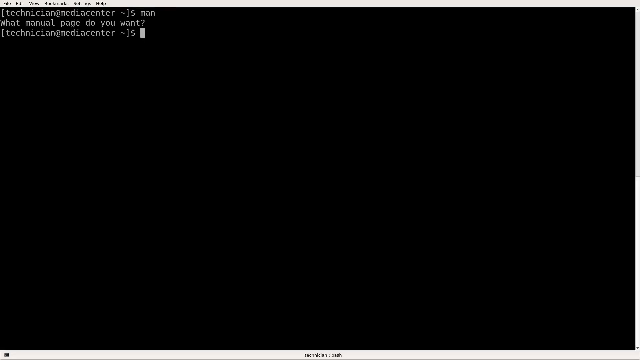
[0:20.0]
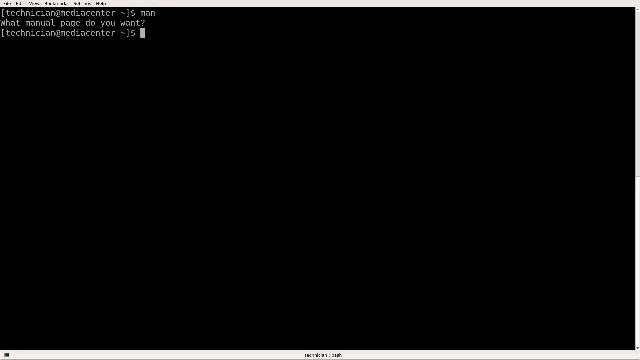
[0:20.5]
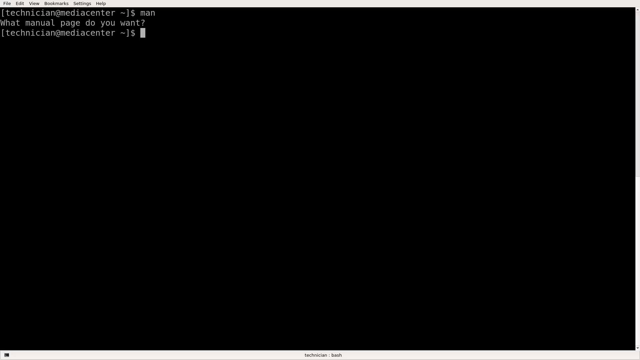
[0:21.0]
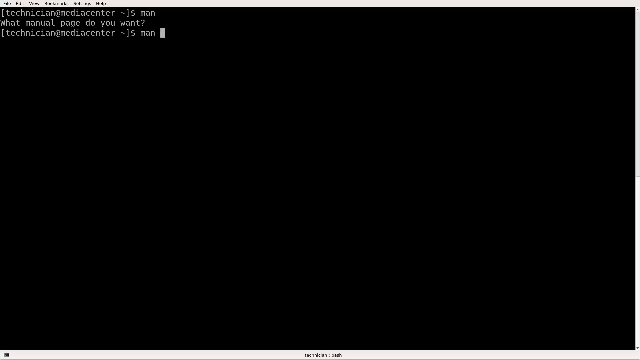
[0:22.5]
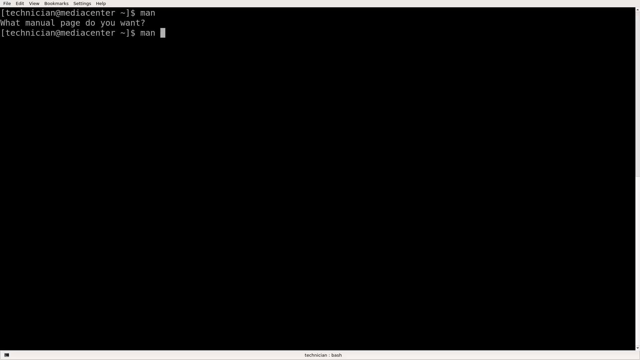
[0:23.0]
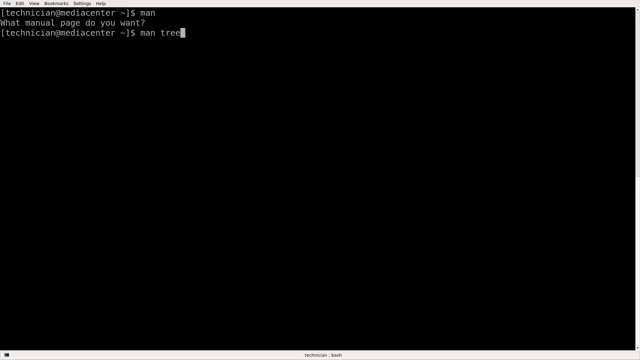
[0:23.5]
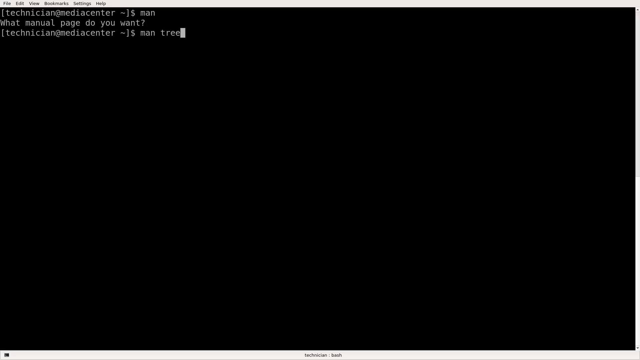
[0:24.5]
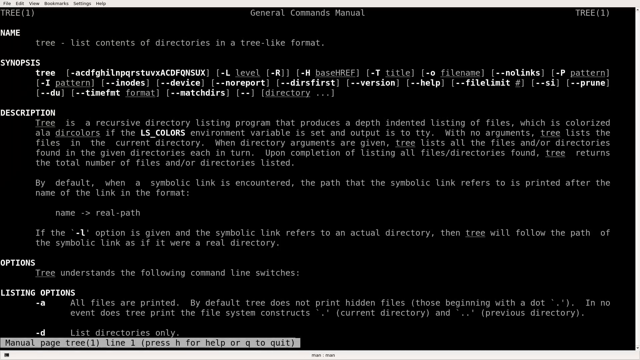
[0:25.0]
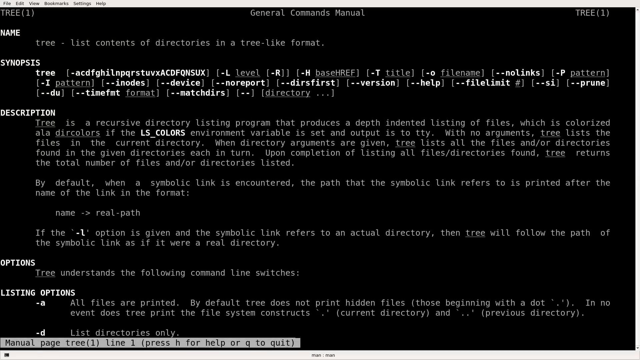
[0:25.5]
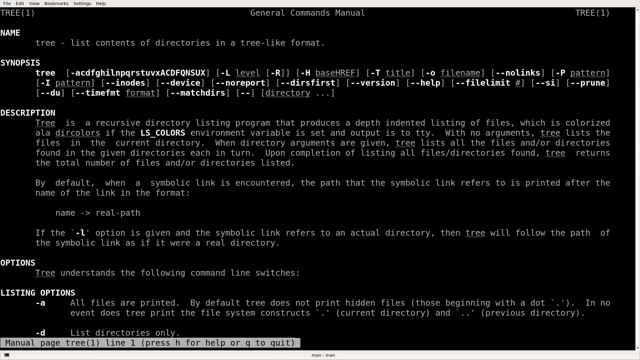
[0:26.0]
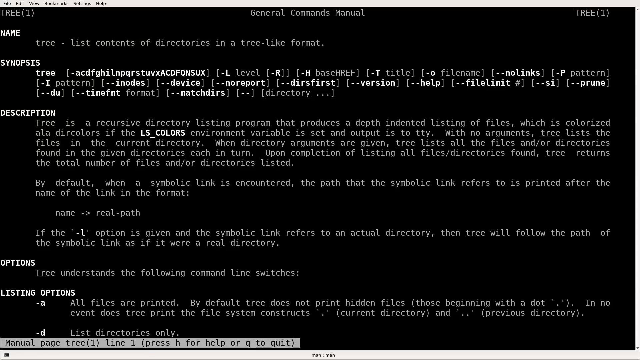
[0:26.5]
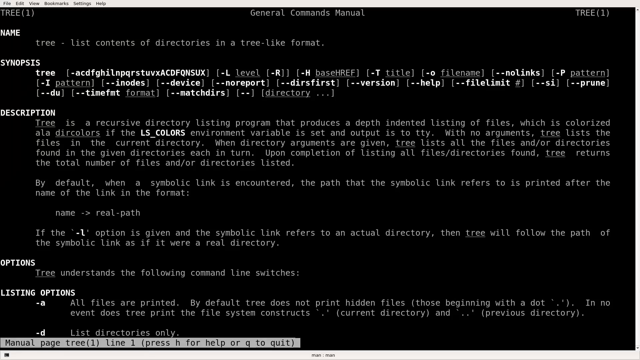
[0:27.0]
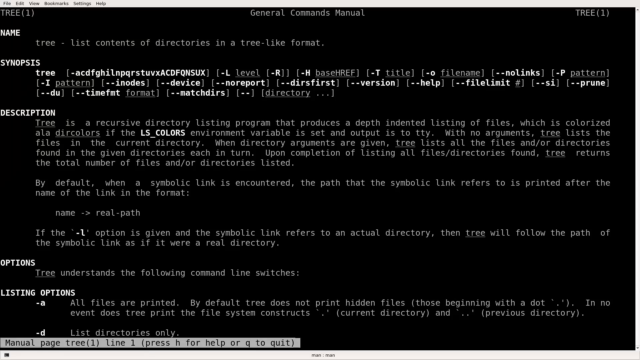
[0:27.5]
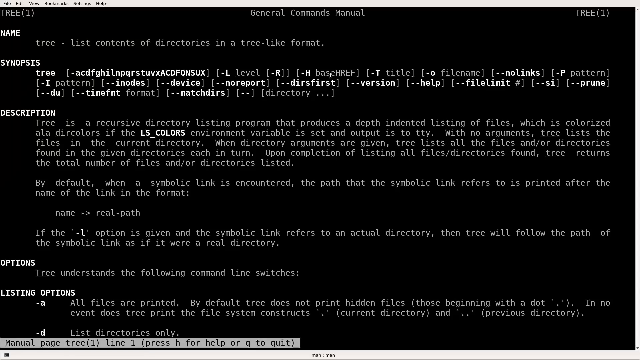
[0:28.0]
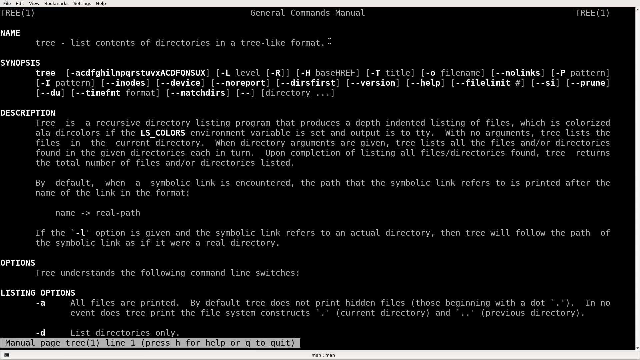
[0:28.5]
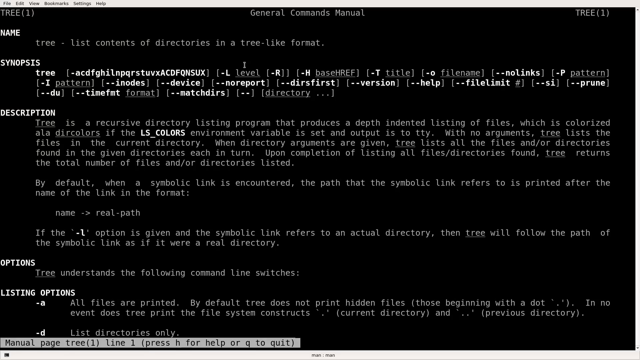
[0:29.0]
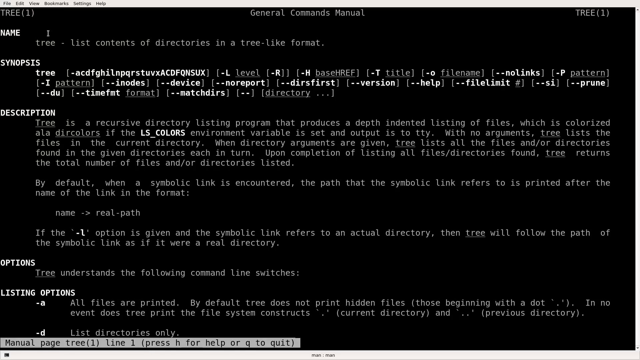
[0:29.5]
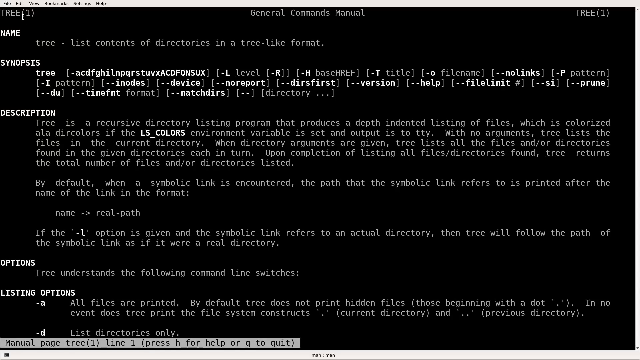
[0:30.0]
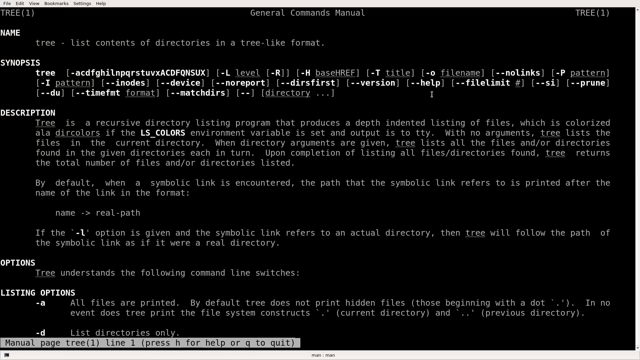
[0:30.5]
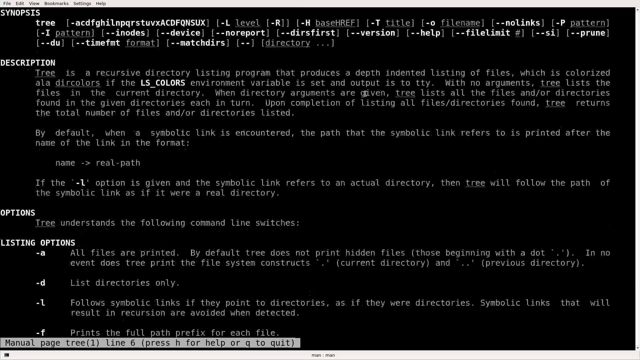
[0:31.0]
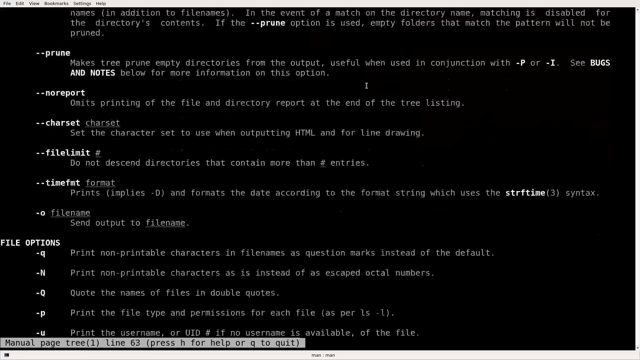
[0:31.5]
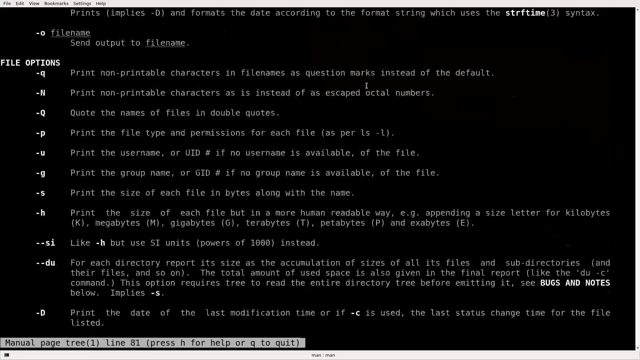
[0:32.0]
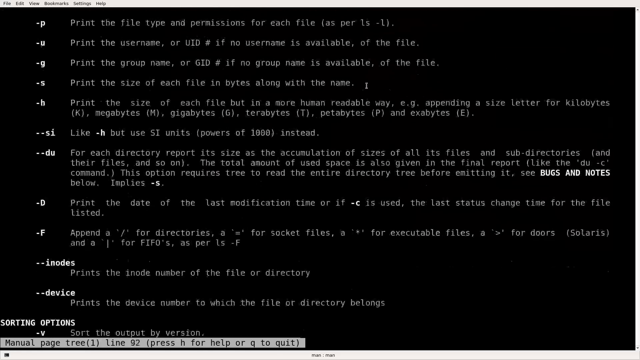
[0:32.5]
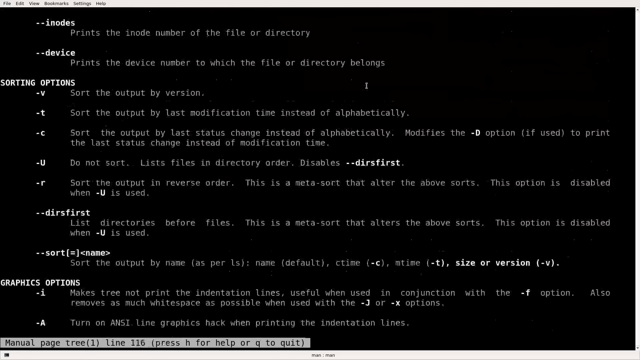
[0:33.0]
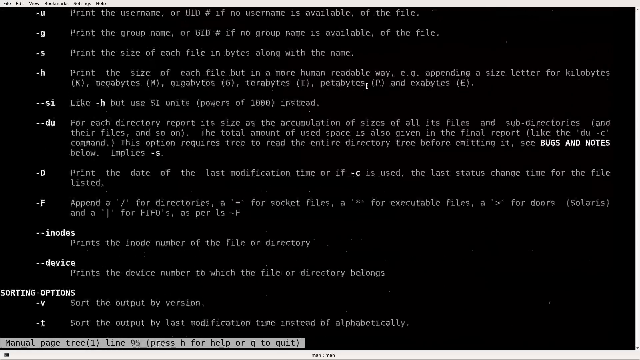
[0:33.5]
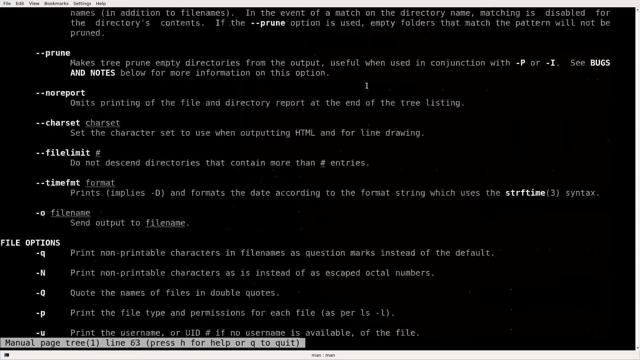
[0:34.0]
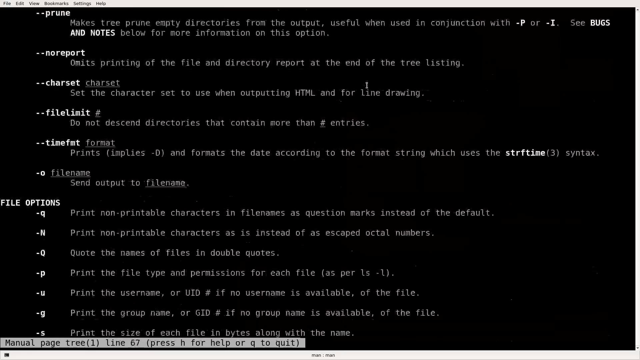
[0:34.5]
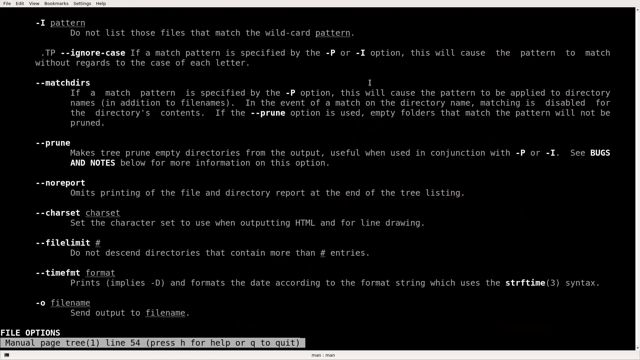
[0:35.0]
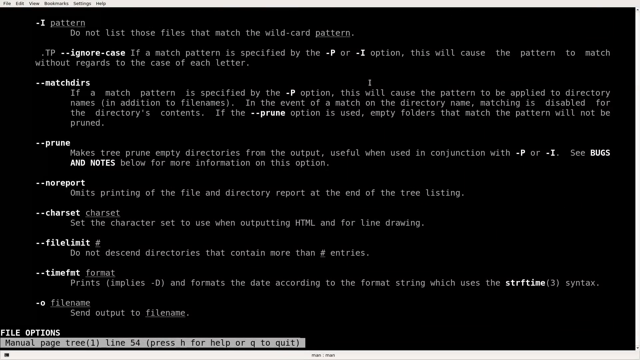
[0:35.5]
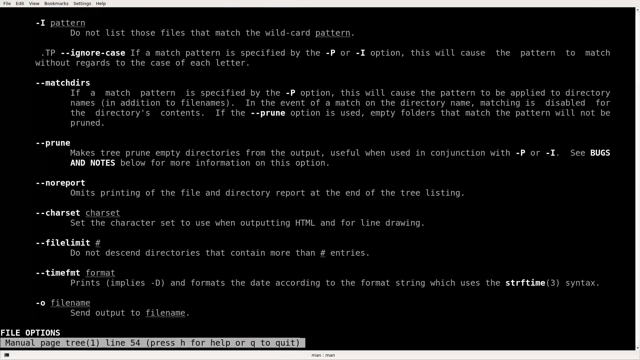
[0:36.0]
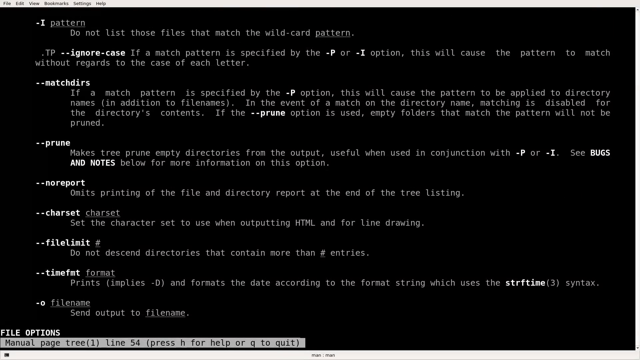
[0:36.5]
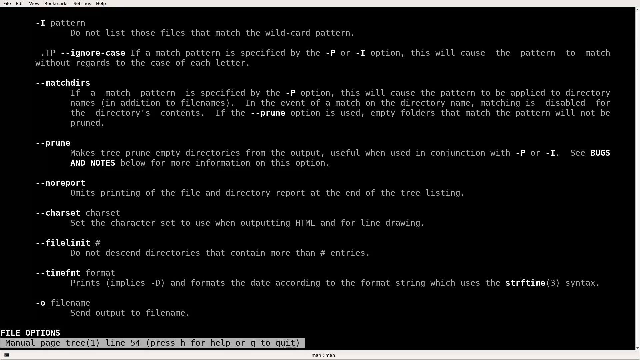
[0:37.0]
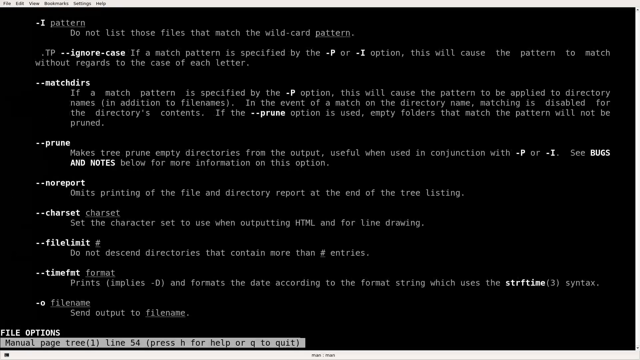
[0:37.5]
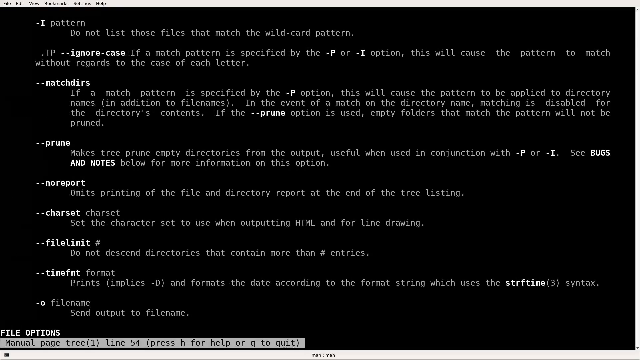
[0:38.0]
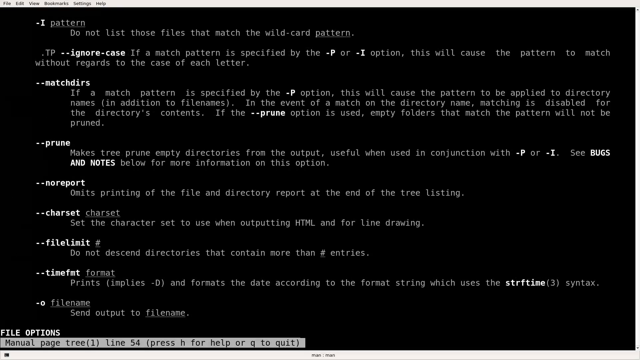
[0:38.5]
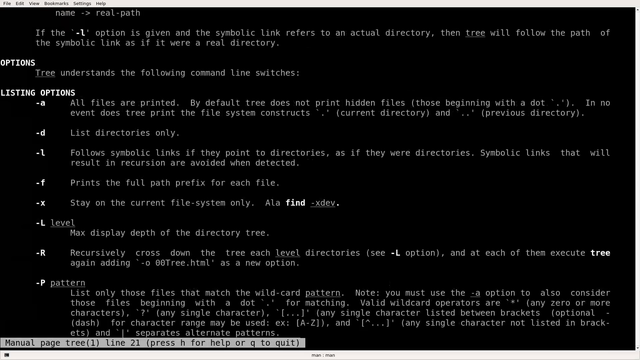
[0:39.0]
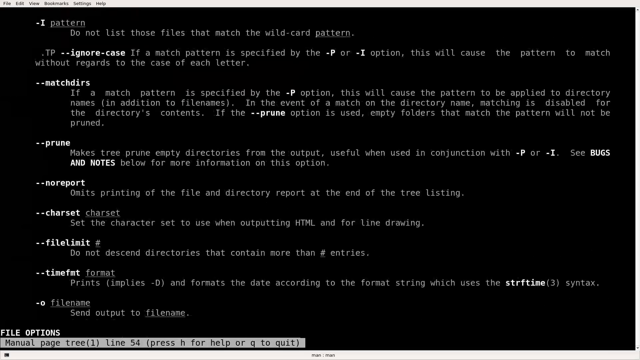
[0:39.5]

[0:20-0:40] Programming is shown on screen, with the text "what manual page do you want?" and information, apparently about the program, above and below it. The view then moves to a "general commands manual" page, with headings on the left-hand side (name, synopsis, description, options, listing options), each with information next to it. The person is scrolling, apparently checking information. The cursor is visible, and the person seems to have typed "tree." Under the name heading it reads "tree" and "list contents of directories in a tree-like format," and the synopsis heading also has "tree" with information about it, including titles and things of that nature, maybe for a website.